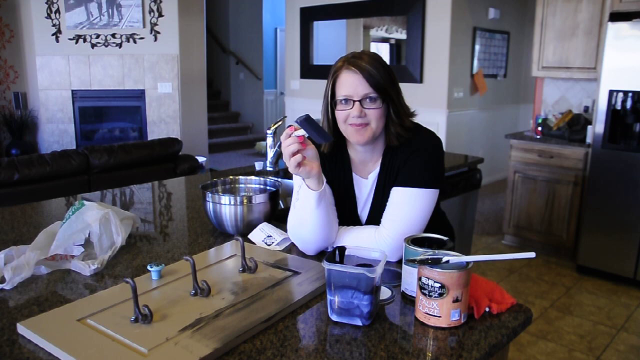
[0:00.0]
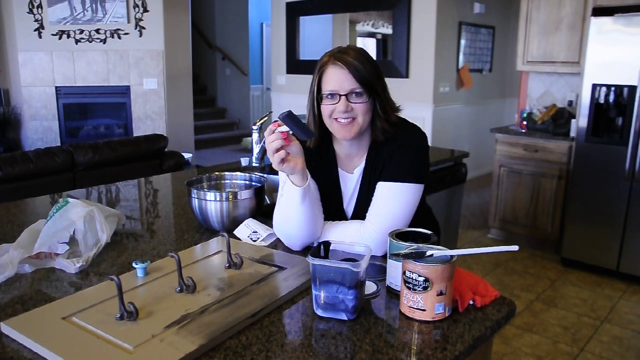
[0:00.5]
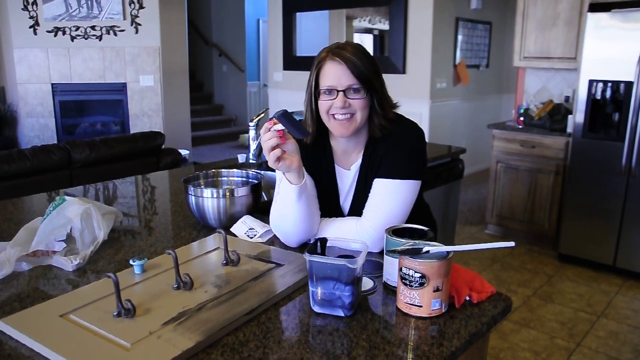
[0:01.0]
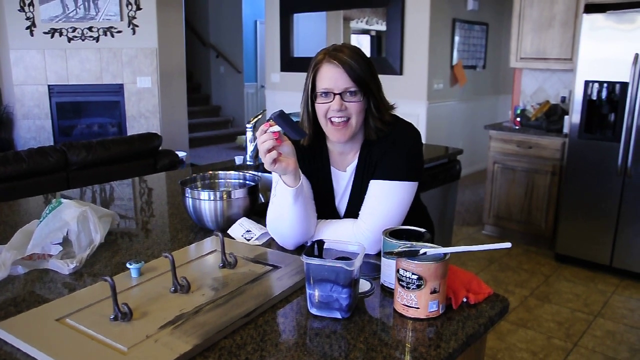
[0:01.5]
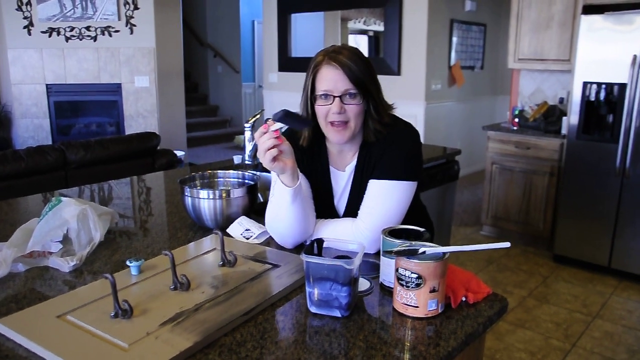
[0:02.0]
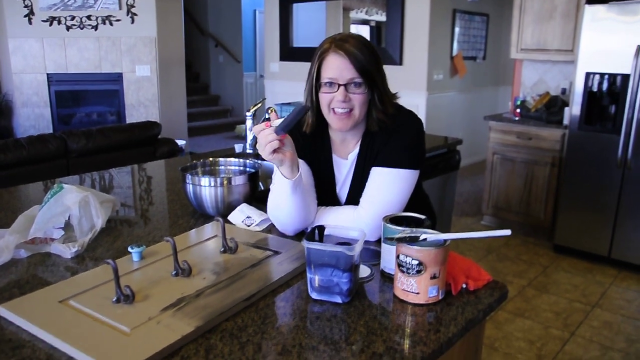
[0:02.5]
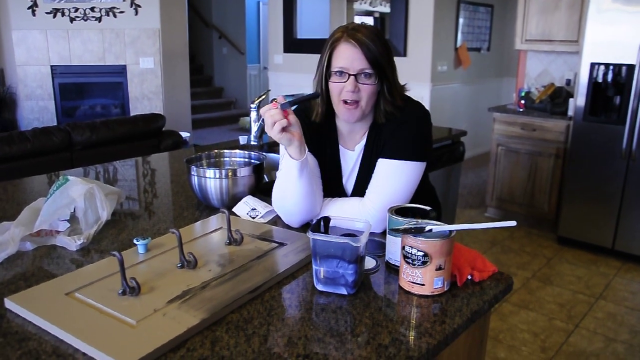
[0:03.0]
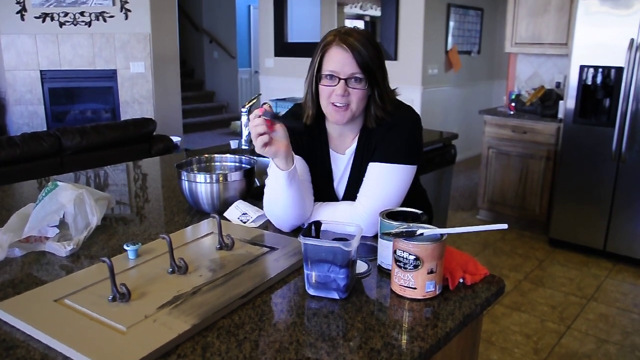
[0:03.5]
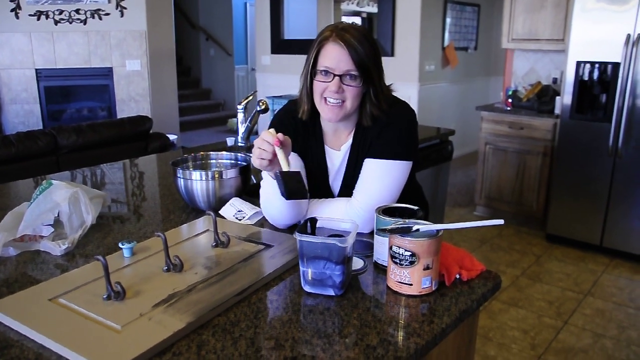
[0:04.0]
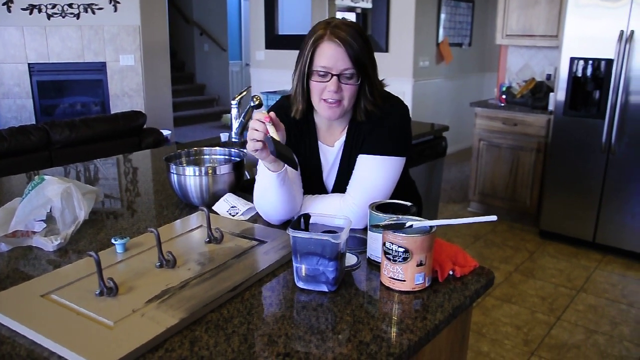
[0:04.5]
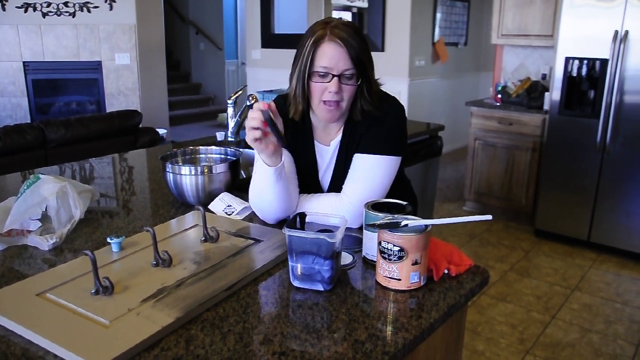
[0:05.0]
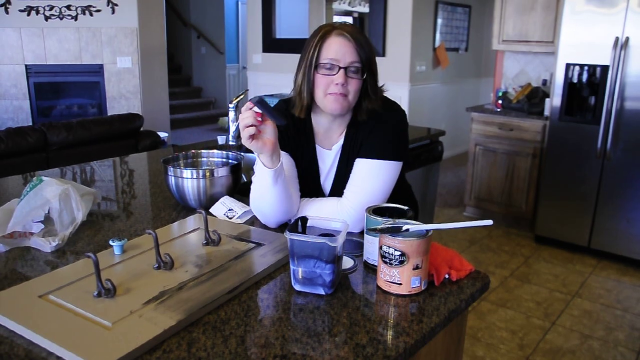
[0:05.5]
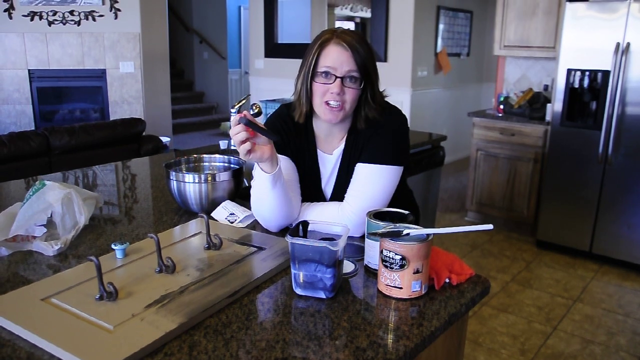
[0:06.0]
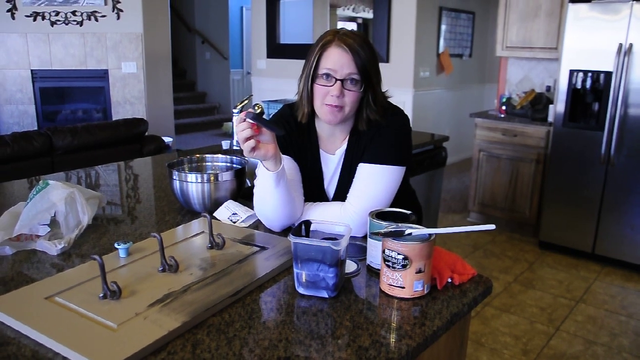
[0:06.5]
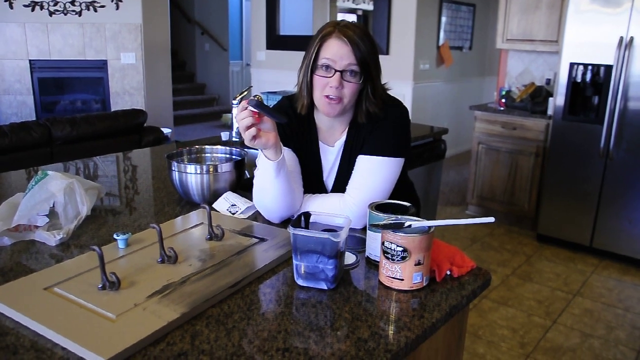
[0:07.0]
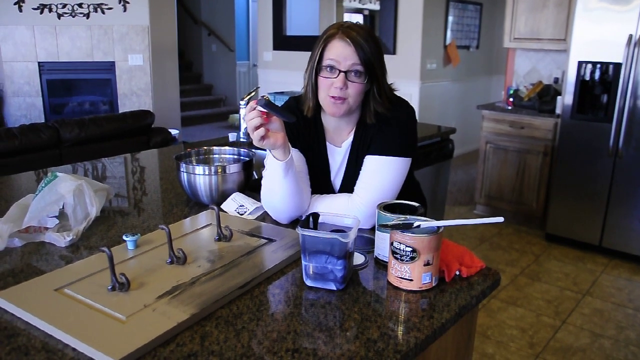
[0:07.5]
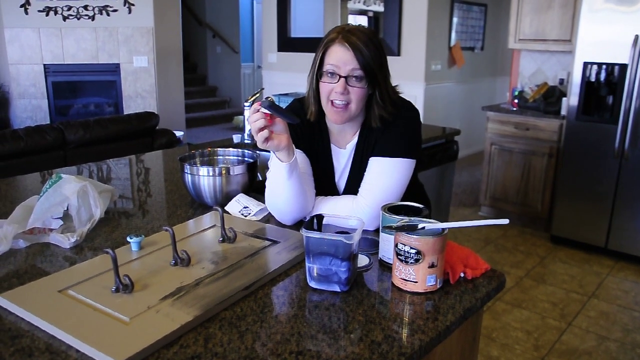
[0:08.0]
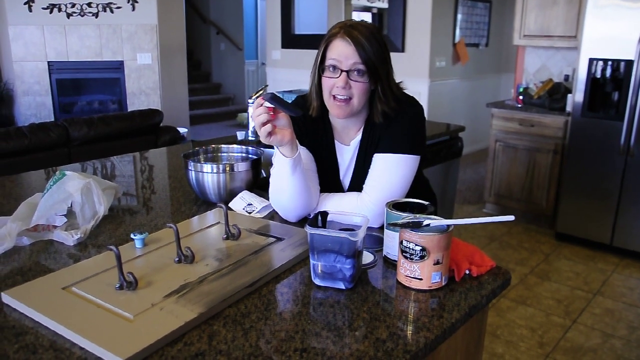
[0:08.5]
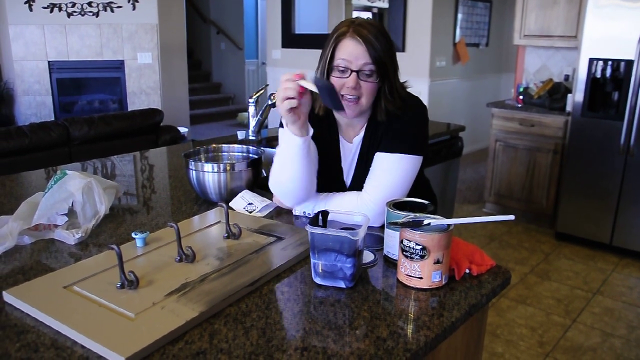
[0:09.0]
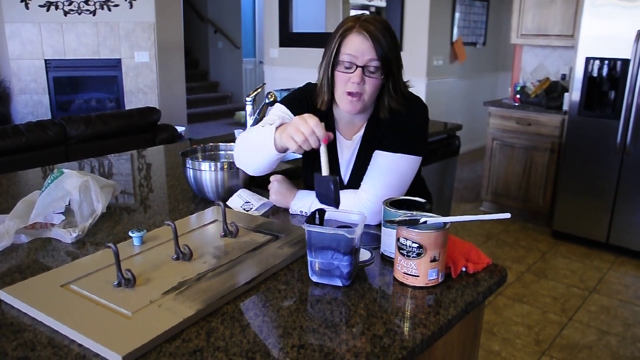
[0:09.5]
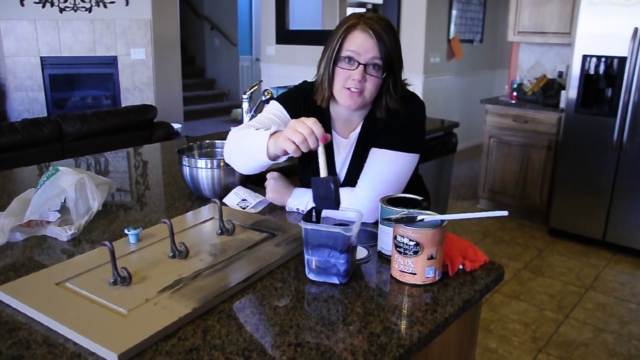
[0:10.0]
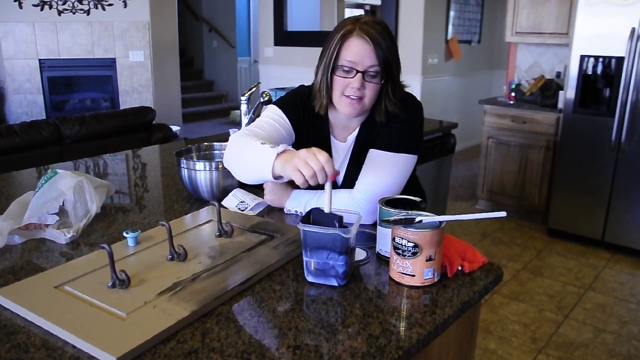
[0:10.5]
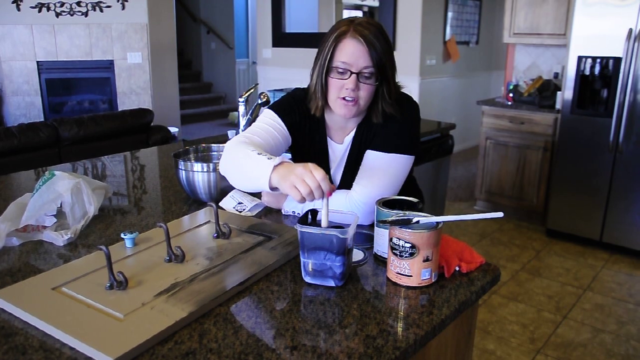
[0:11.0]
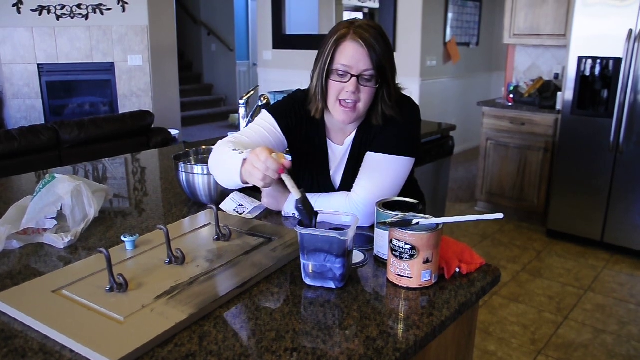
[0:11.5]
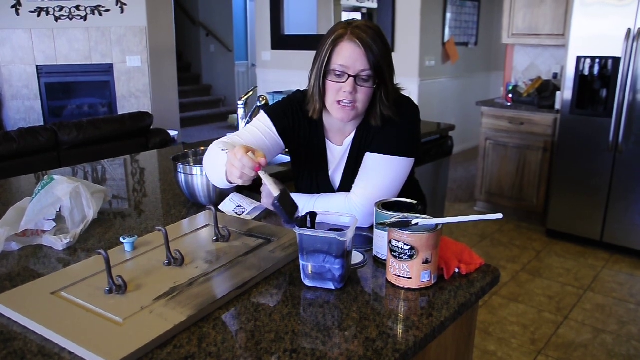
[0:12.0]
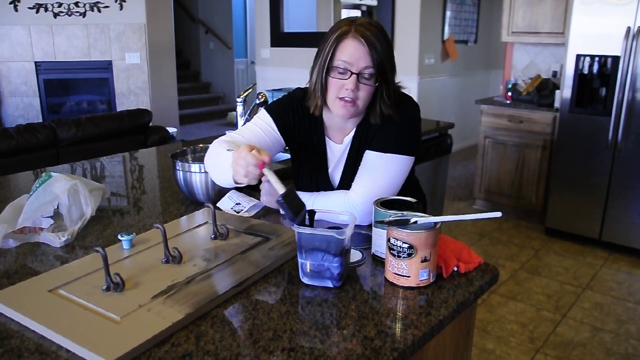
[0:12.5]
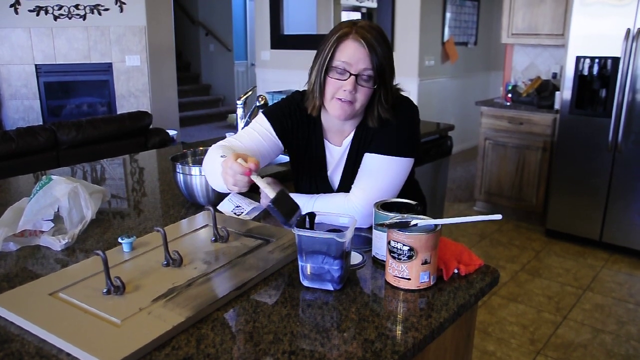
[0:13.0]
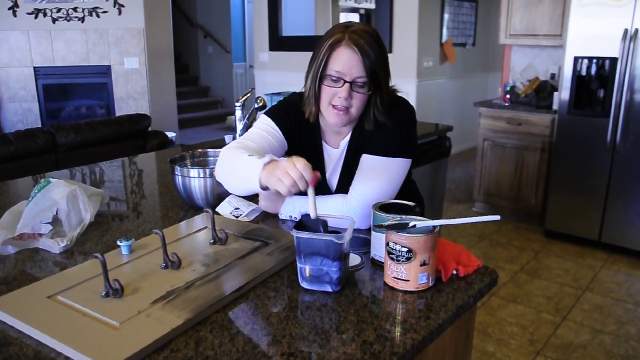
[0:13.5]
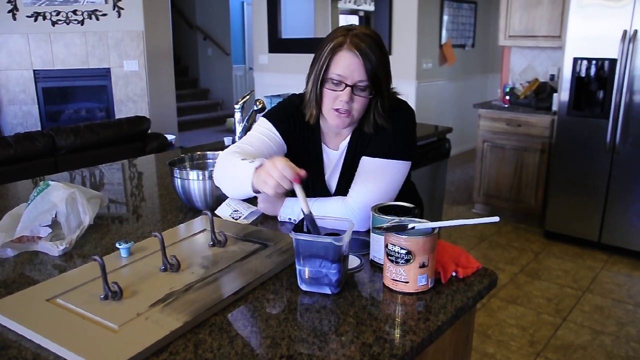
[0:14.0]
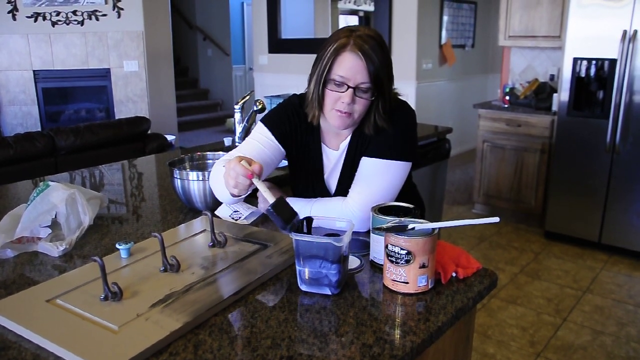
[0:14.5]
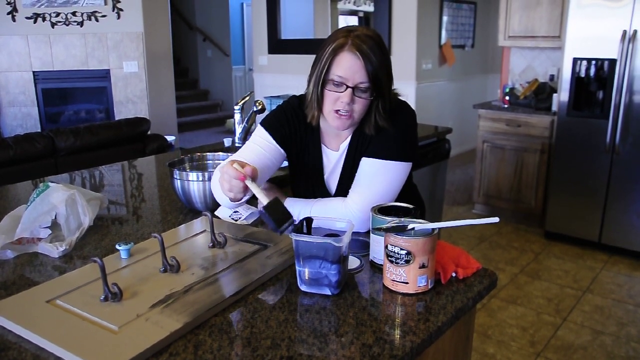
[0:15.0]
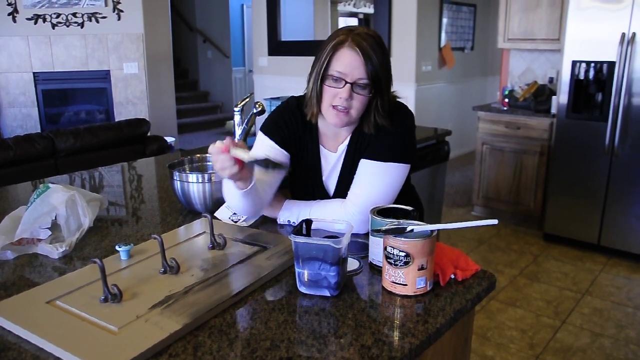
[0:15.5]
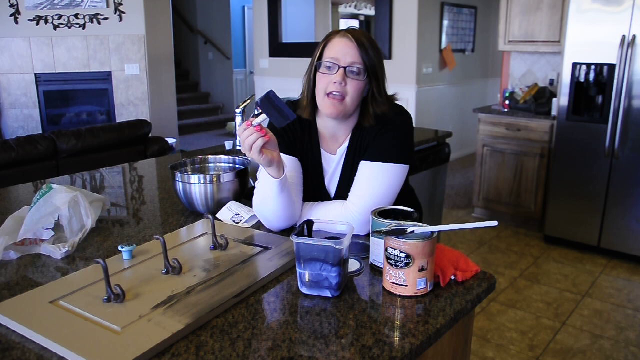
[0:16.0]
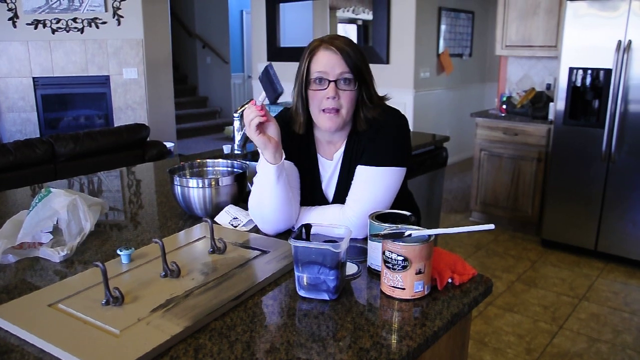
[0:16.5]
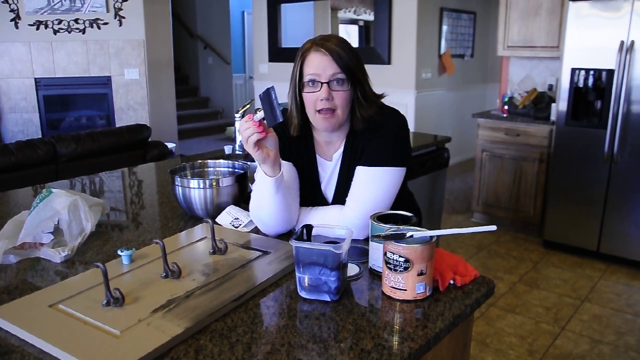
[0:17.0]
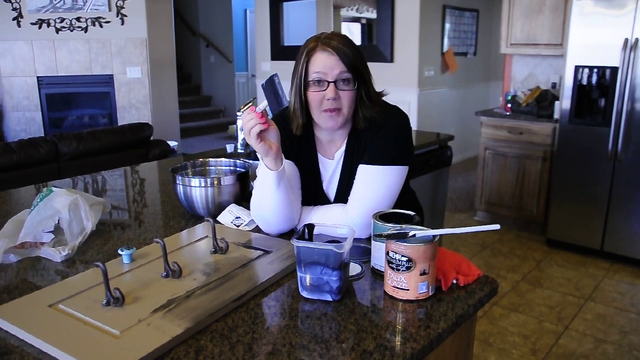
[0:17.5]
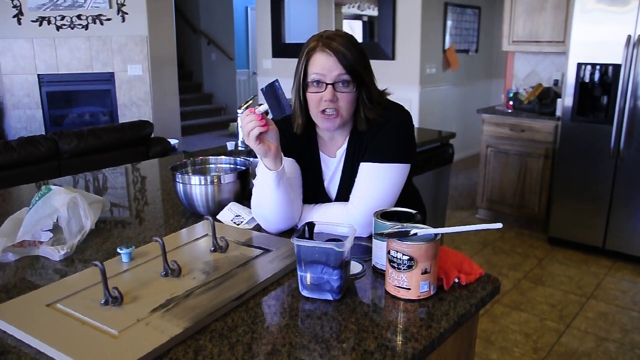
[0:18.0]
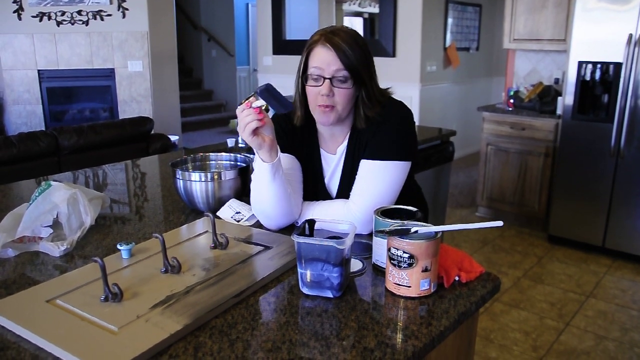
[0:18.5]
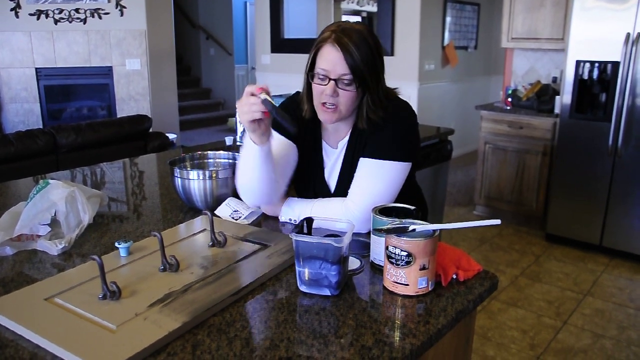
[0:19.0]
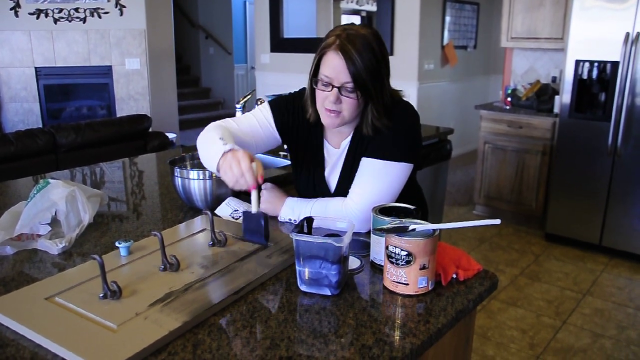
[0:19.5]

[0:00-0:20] A woman in a white shirt with a black sweater vest over it has two cans of paint in front of her and a plastic container that appears to hold blue paint. She holds a paintbrush in her right hand and talks to the camera, apparently about to give instructions. She dips the brush into the plastic container, scrapes it off, and begins applying it to a piece of wood on the table. The wood has three metal hooks on it and looks like something to be hung on the wall for hats or scarves. She seems to be staining or painting it: the wood starts out a very beige-tan color, but what she applies appears to be a dark gray or black. She is leaning against what appears to be a kitchen counter.